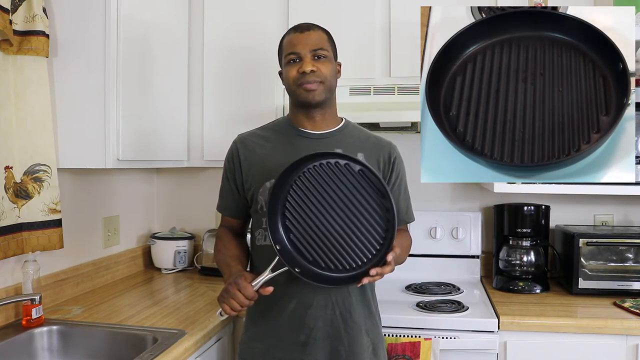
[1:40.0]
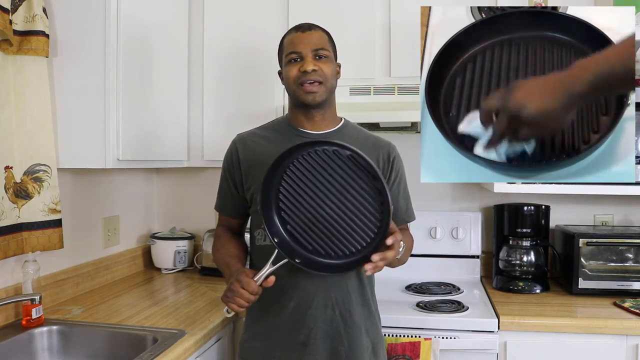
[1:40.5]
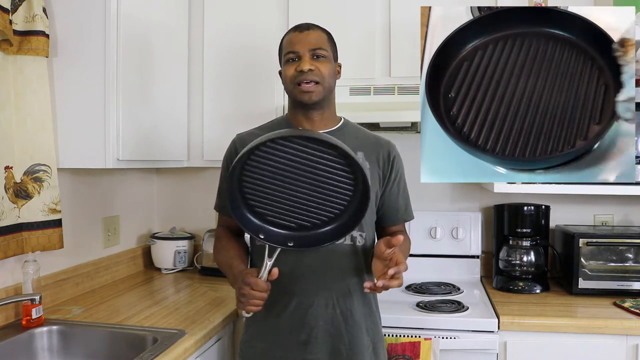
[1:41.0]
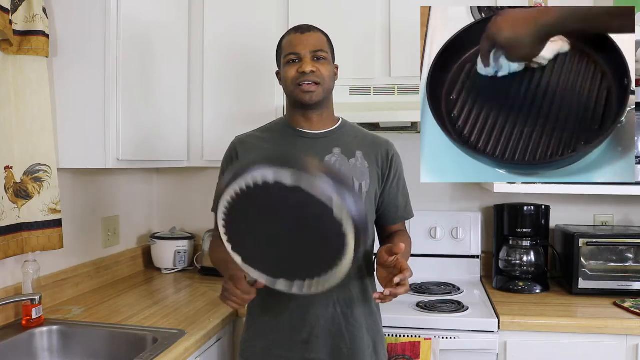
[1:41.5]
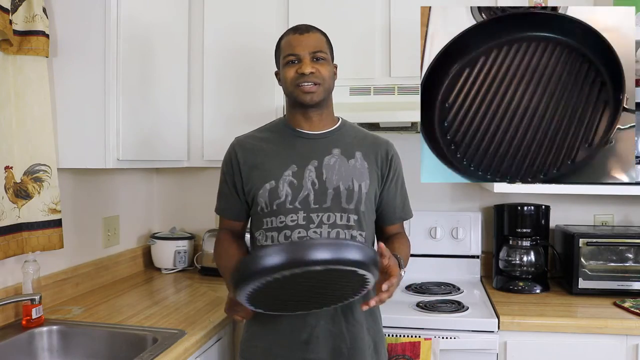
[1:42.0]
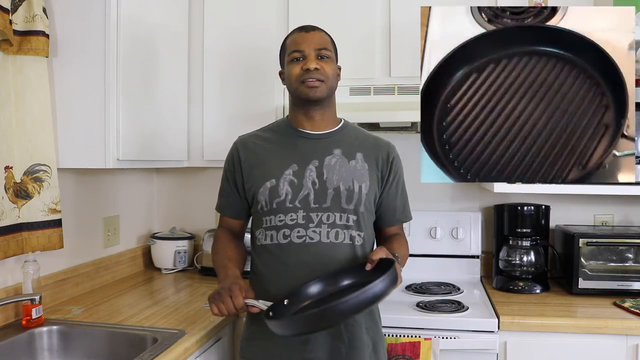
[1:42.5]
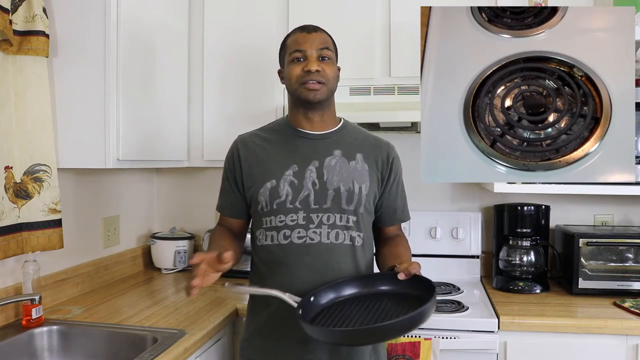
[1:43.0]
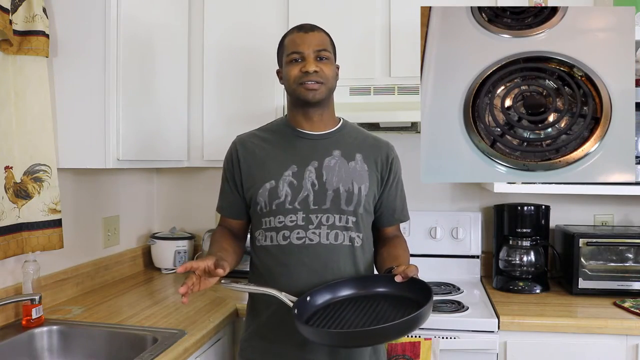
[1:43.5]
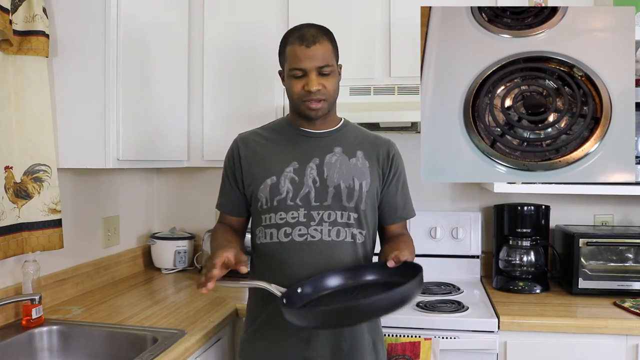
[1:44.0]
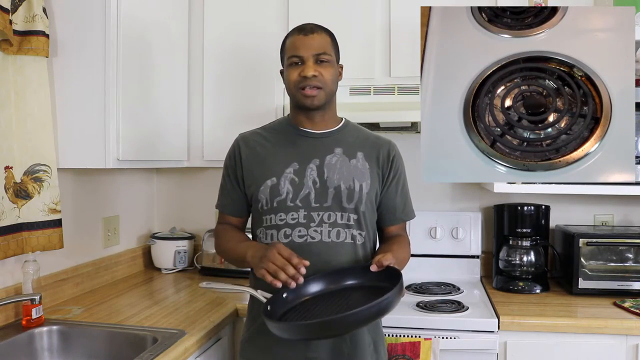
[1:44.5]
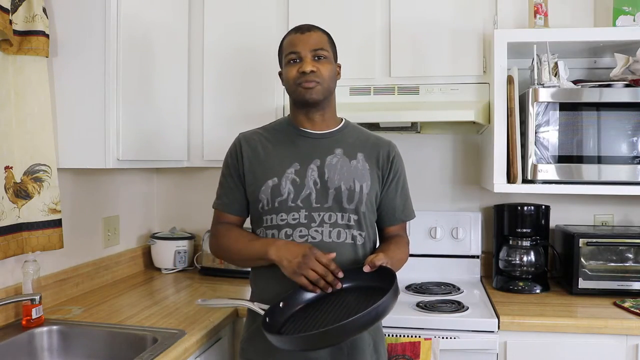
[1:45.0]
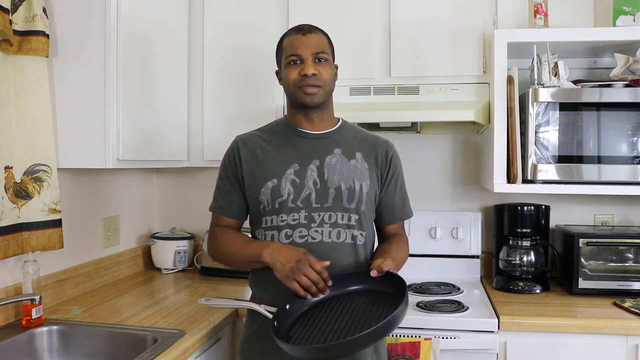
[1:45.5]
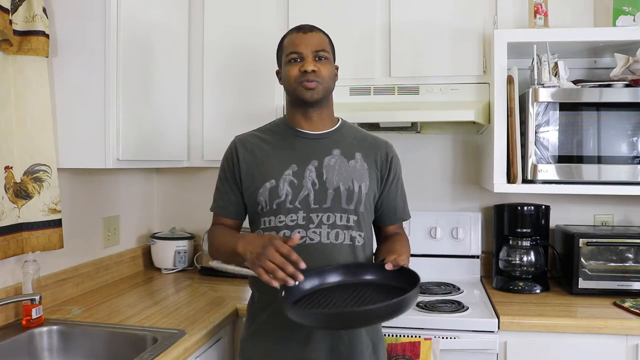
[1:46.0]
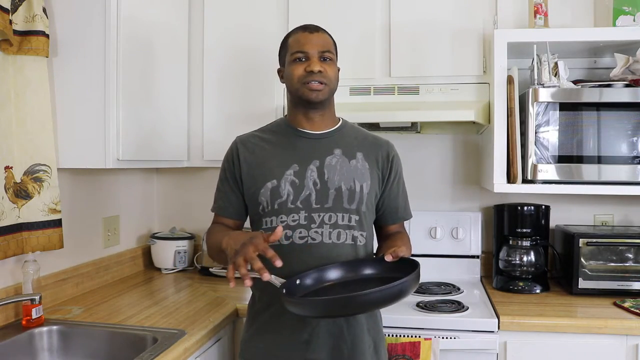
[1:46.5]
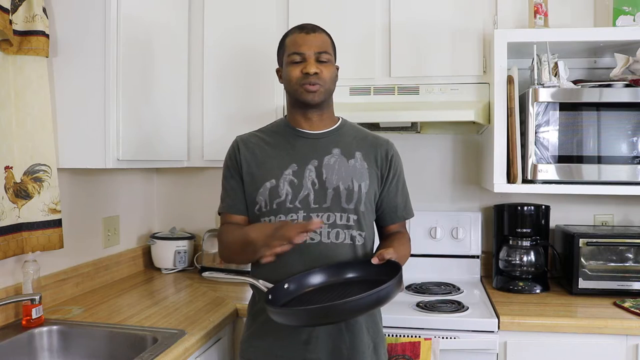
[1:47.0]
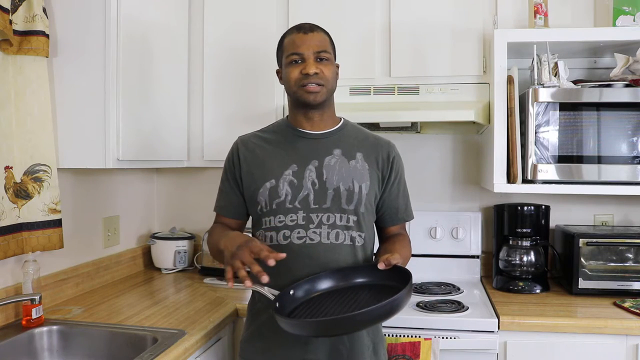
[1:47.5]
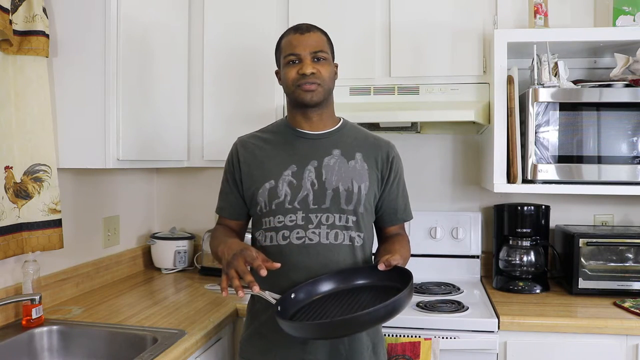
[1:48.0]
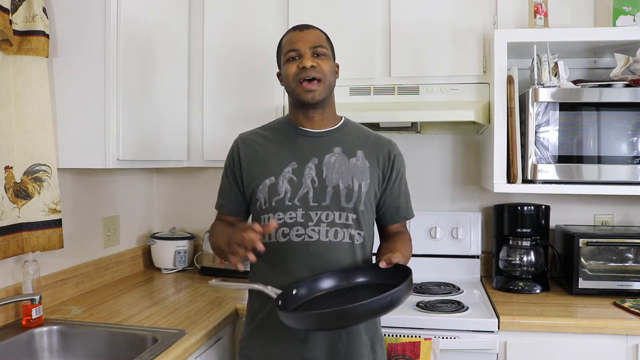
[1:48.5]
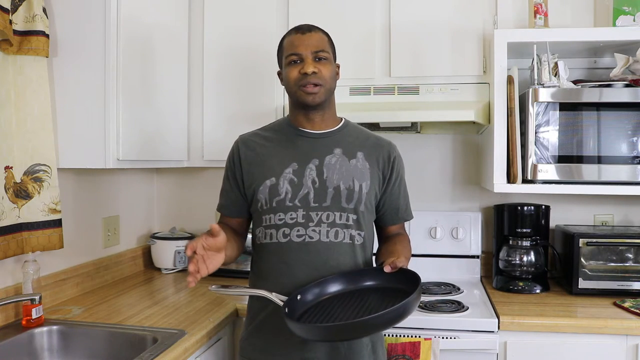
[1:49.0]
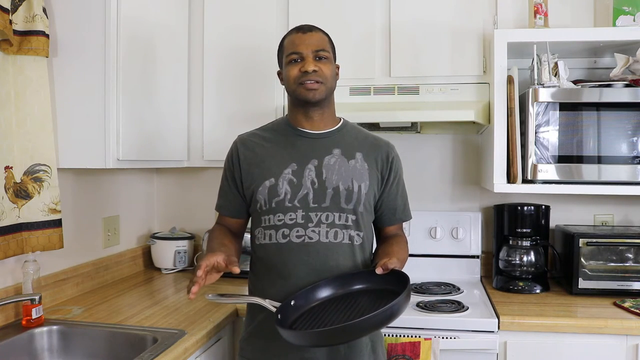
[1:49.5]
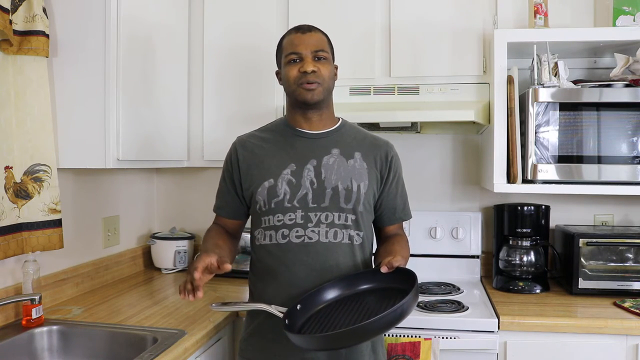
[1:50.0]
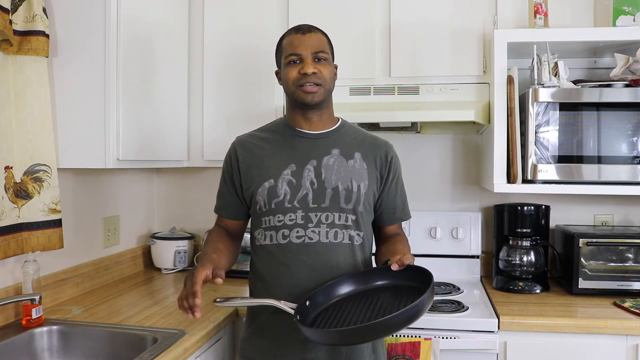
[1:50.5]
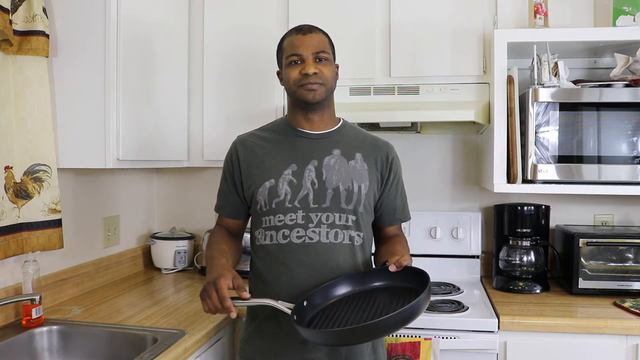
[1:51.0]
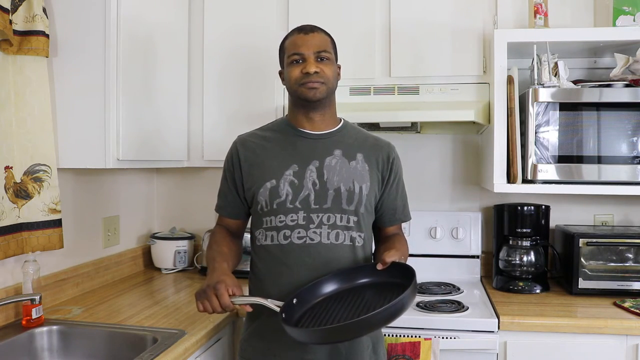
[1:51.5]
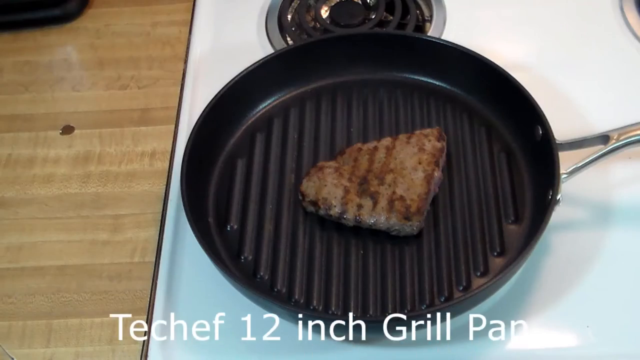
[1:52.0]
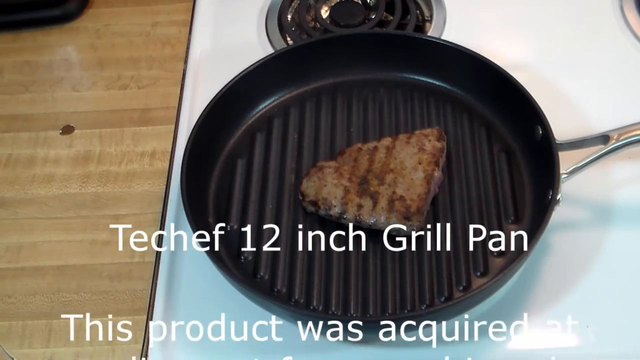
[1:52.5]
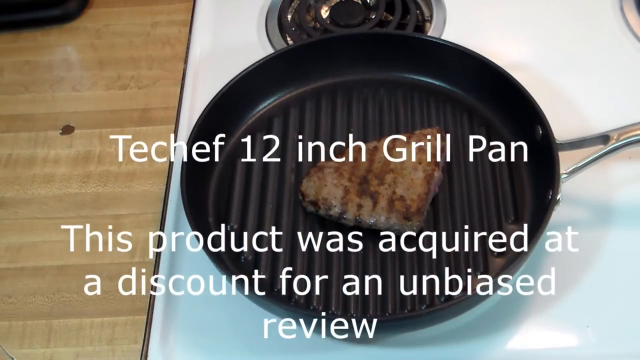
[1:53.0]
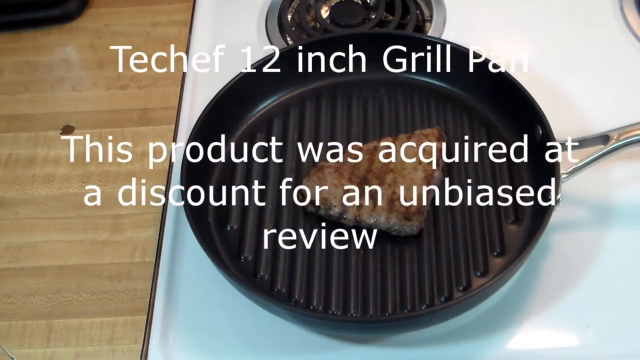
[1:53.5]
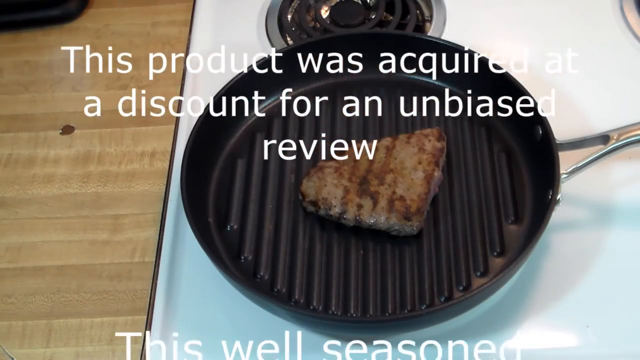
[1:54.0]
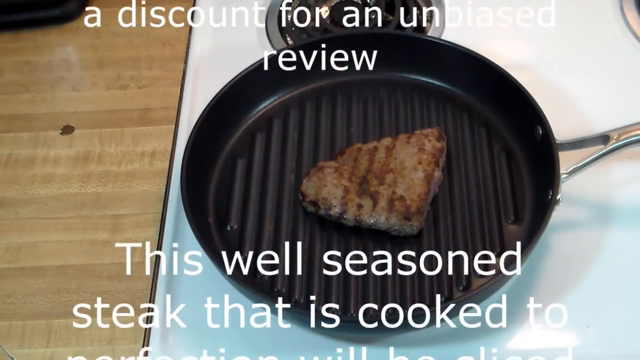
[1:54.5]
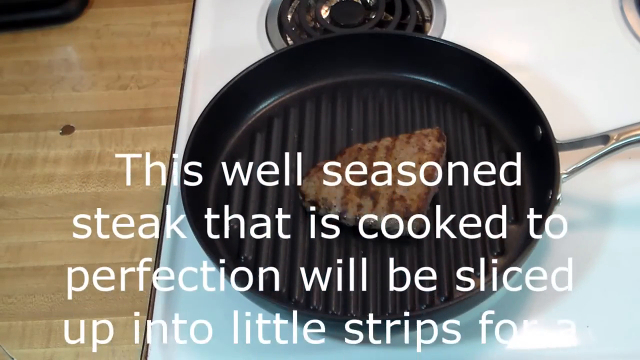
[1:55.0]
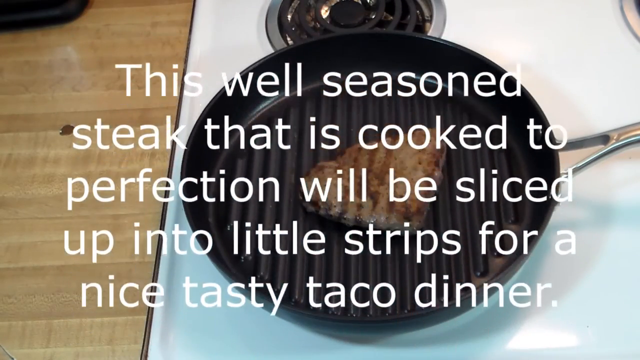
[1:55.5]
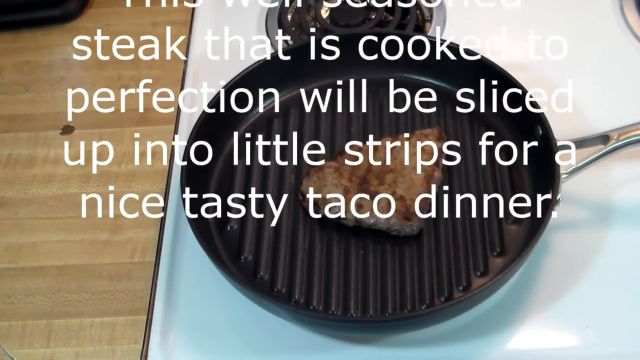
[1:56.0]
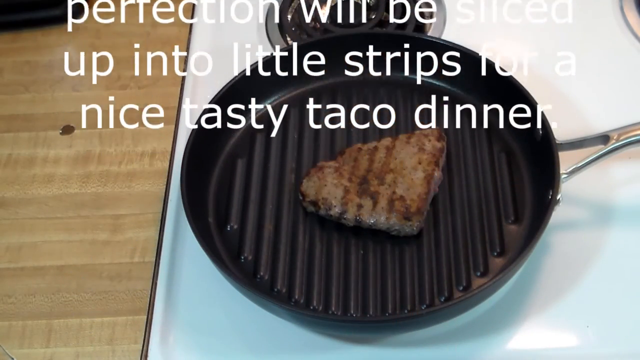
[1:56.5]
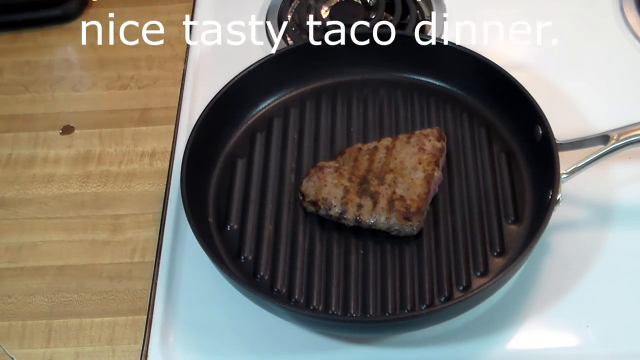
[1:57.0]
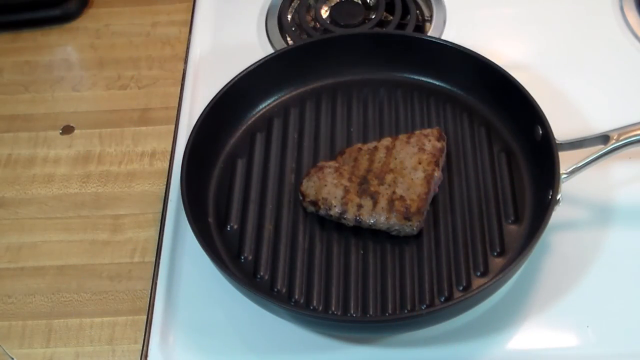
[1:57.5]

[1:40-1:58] In the kitchen, a man talks directly to the camera while holding a pan with both hands; he has a watch on his left hand. He stands in front of a counter and a stove, with drawers on the wall behind him. A smaller video in the top right portion of the frame shows the pan, which was used to cook a steak, being cleaned with a tissue. The pan is then pulled away from the stove, showing only the grill on the stove. The small video in the top right then disappears, revealing the background behind it, which now shows a microwave. The video ends with a still image of a steak inside a pan as words roll up onto the screen: "Techev 12-inch grill pan. This product was acquired at a discount for an unbiased review. This well-seasoned steak that is cooked to perfection will be sliced up into little strips for a nice tasty taco dinner."